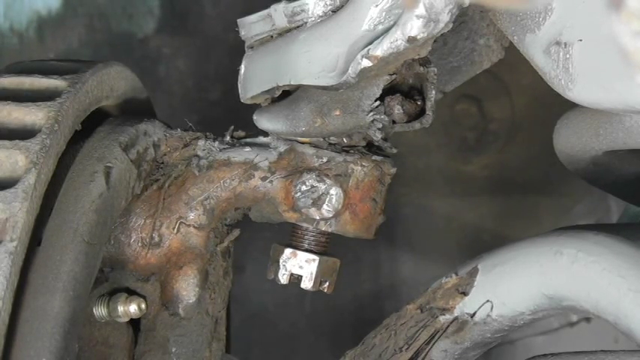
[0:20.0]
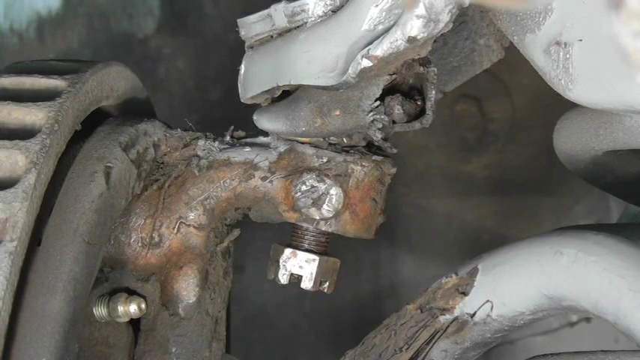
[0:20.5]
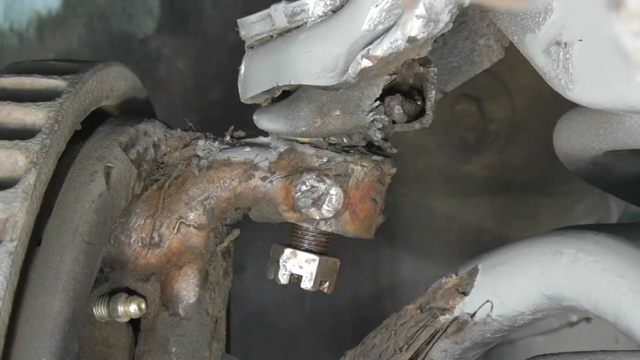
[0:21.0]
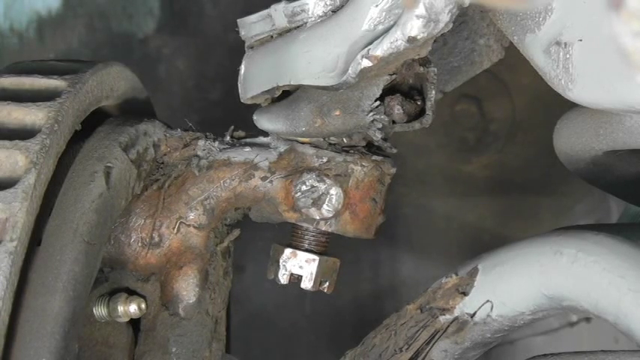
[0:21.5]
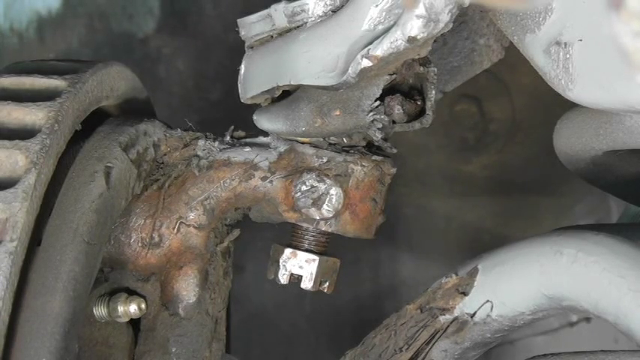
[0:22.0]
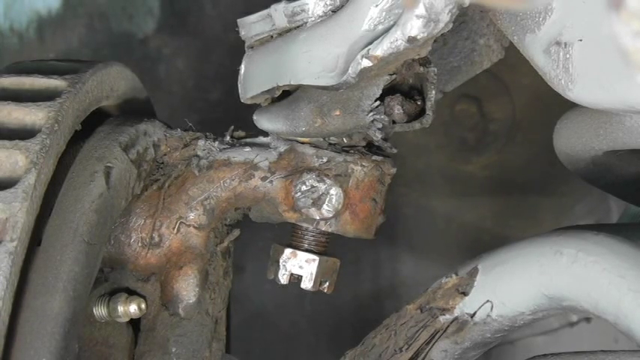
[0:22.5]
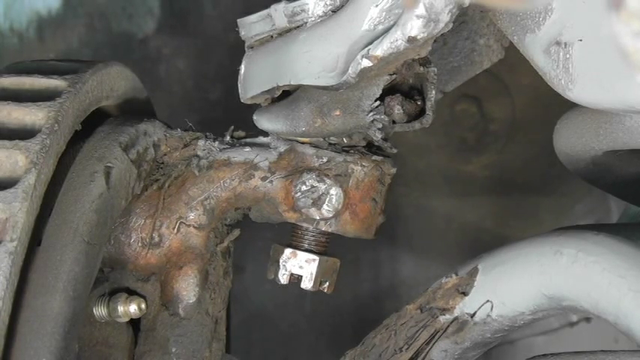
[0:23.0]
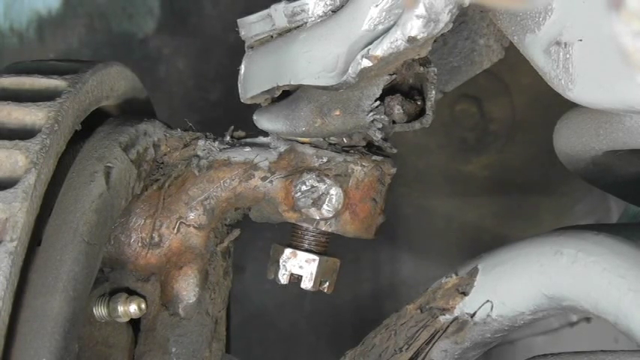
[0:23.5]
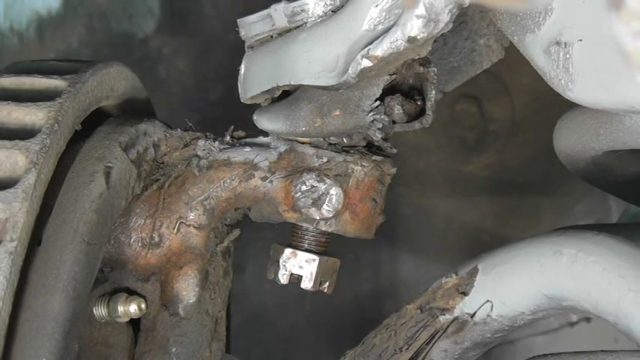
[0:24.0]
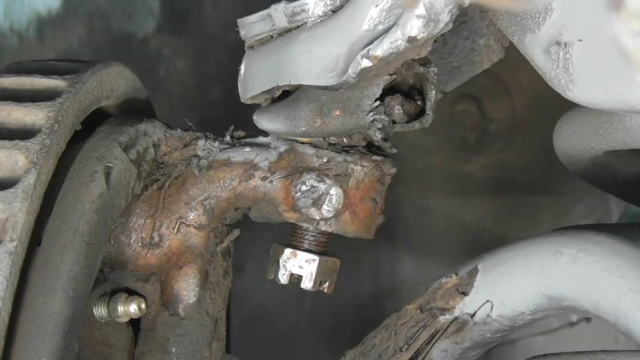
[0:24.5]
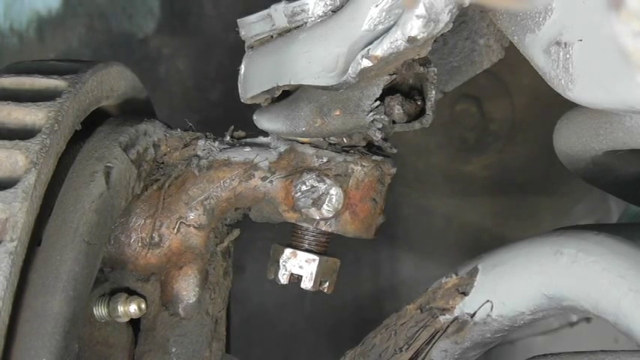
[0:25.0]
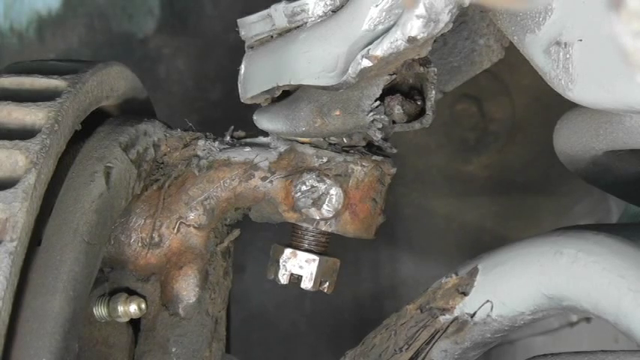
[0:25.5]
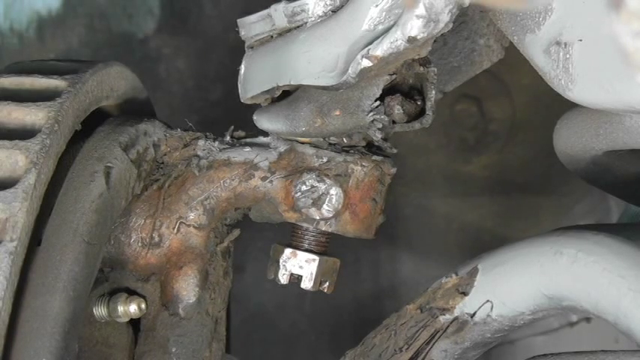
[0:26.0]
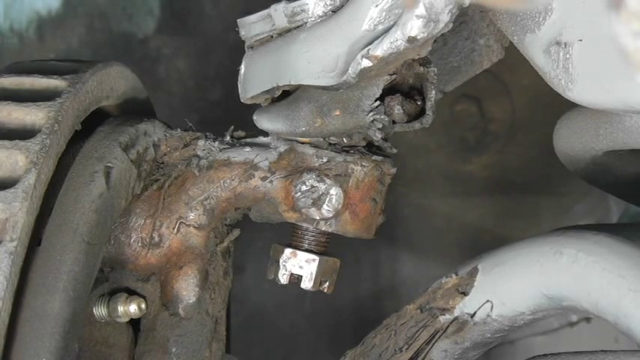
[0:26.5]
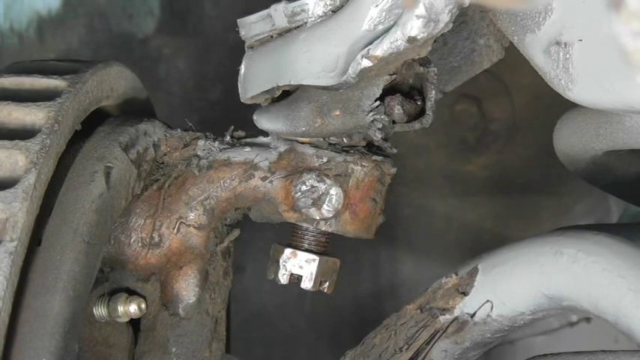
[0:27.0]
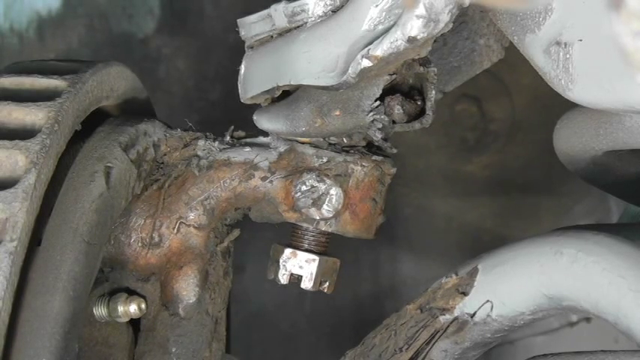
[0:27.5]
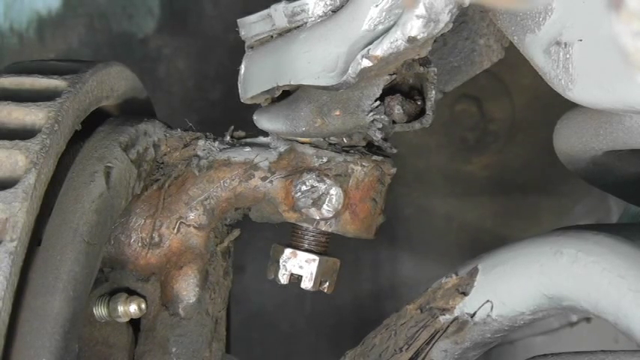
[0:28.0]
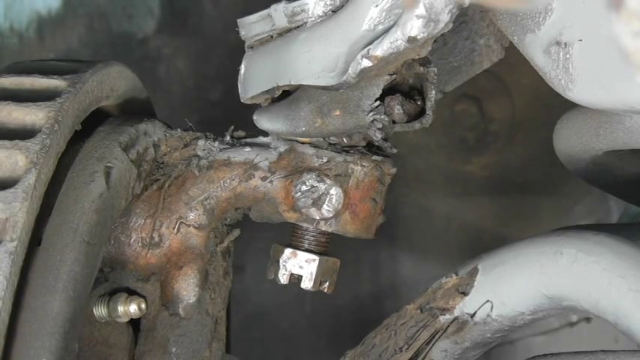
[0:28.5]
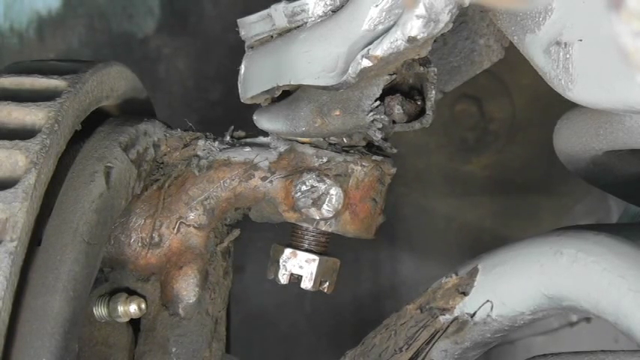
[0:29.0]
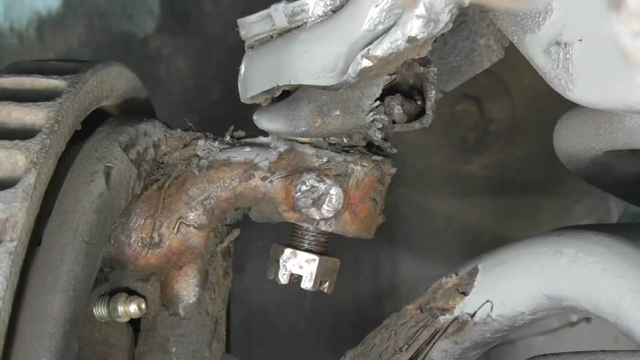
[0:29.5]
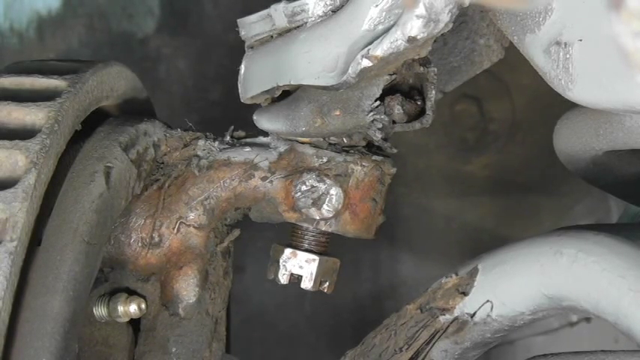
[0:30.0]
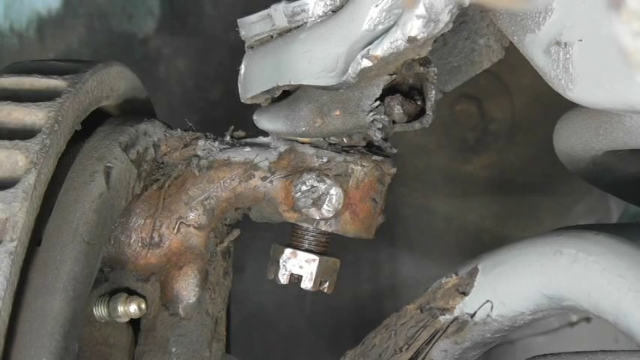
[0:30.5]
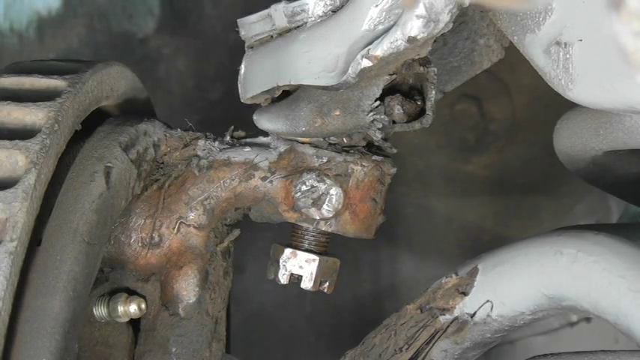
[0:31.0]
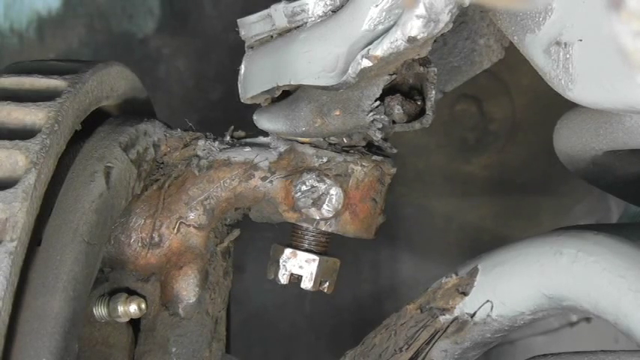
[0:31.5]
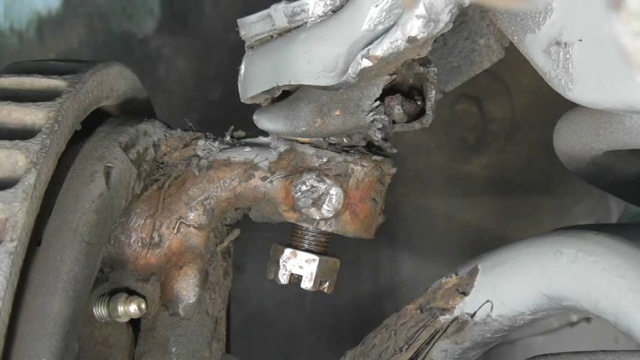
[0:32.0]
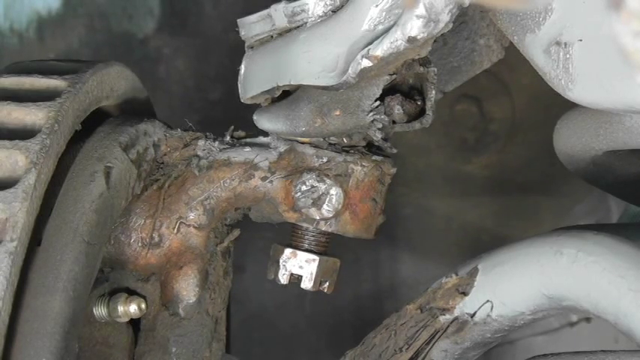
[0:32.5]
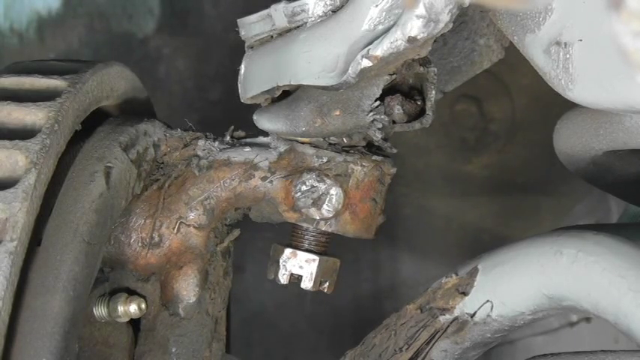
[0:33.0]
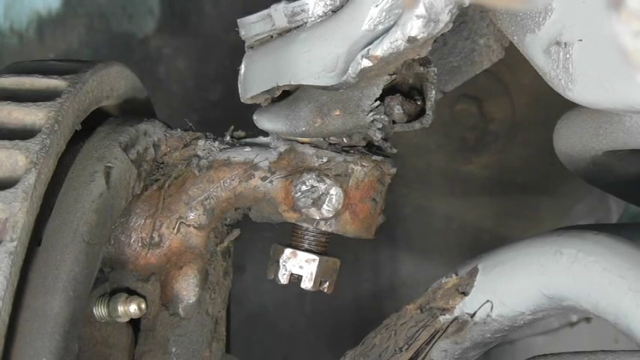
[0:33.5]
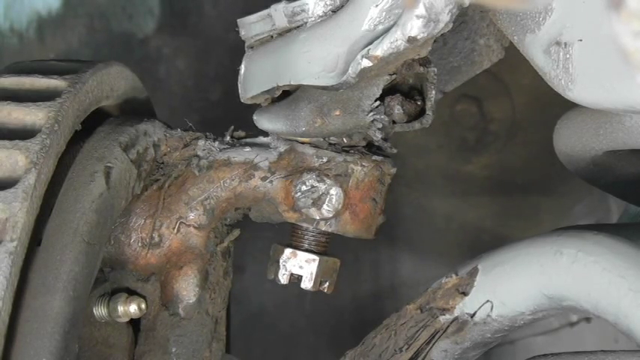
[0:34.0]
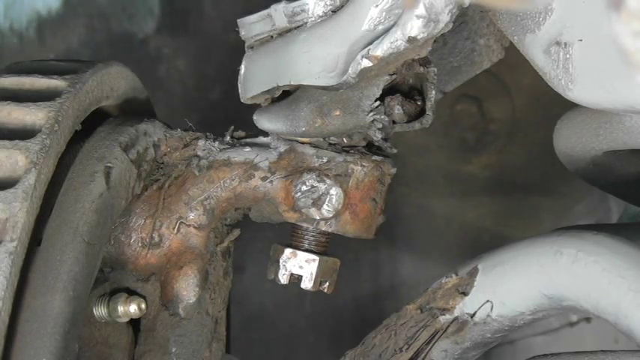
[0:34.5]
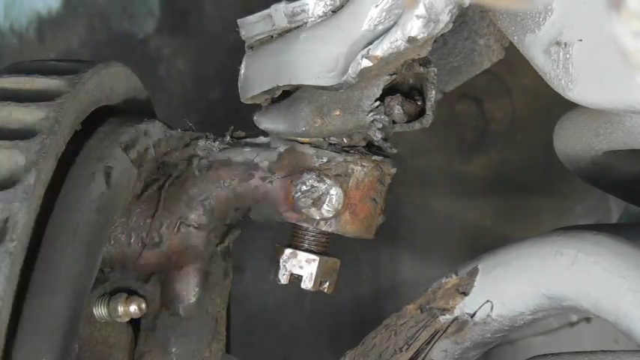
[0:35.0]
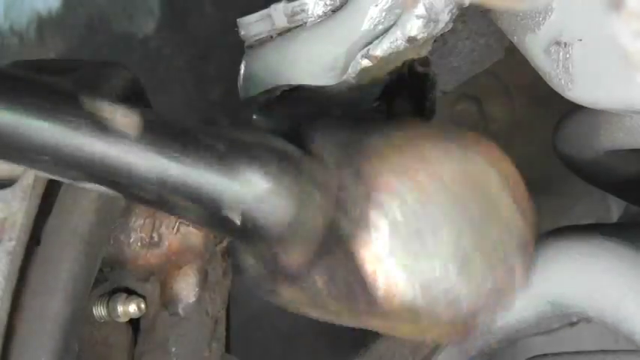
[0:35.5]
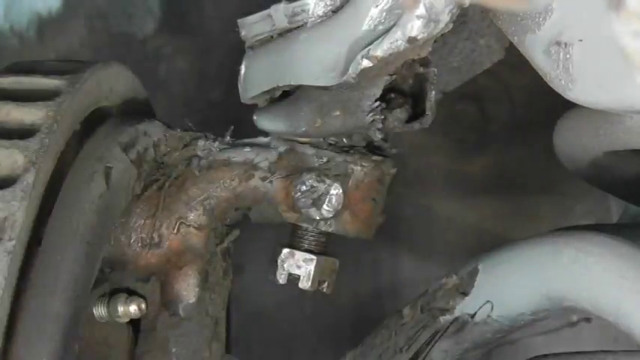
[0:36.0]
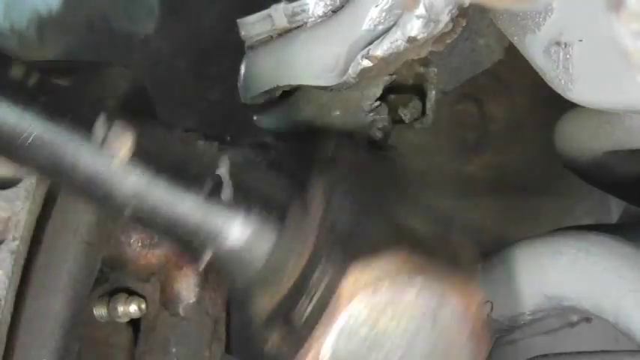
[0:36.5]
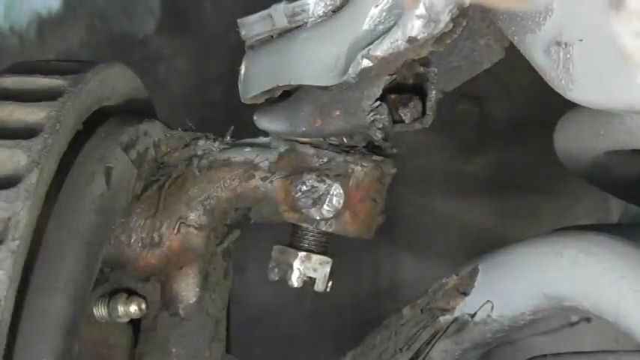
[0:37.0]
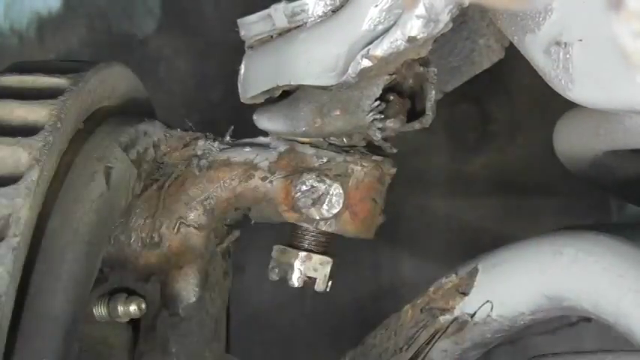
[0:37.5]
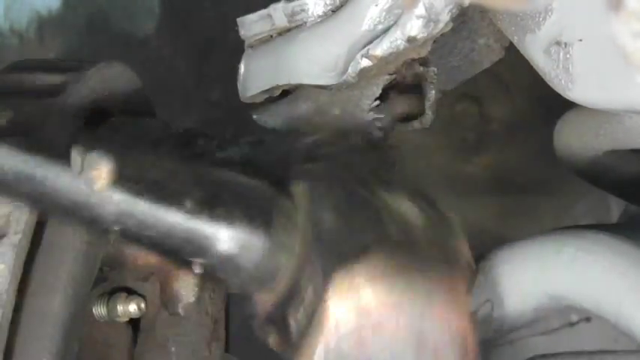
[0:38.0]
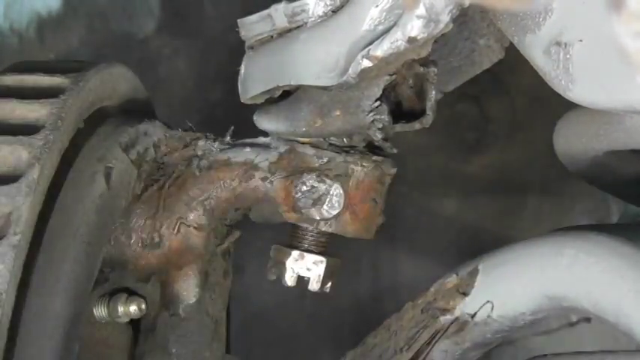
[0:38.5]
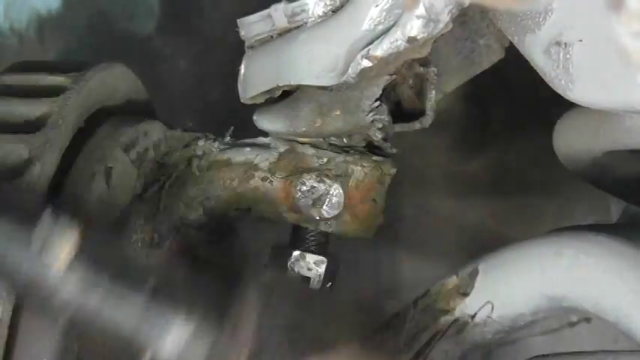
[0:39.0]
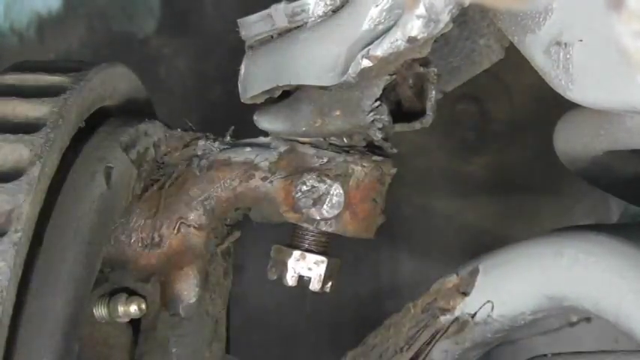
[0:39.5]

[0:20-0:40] The underside carriage of a wheel well is shown, with some damaged metal and steel. There is not much movement at first. The metal is in steel-gray colors, and there looks to be some rust and corrosion on the arm of this underneath piece; the rust is a reddish gold color. There appear to be some broken pieces along it as well. At one point a hammer or metal wrench comes in and strikes the arm where the nut and bolt are, apparently trying to loosen it. It hits approximately six times. The hammer is a black and gray metal hammer that looks to have some weight to it.